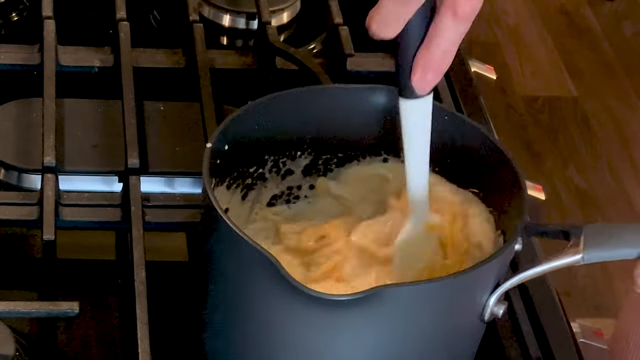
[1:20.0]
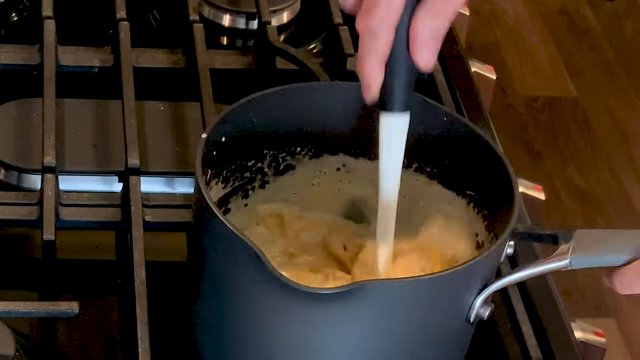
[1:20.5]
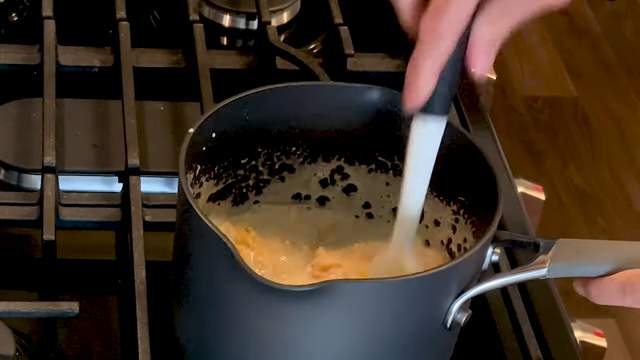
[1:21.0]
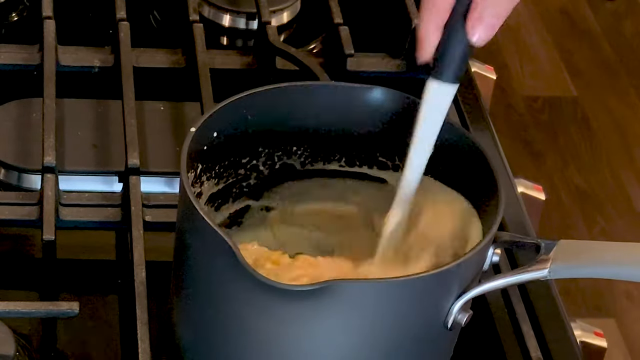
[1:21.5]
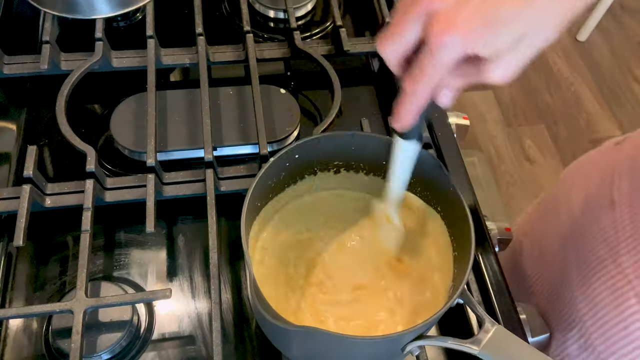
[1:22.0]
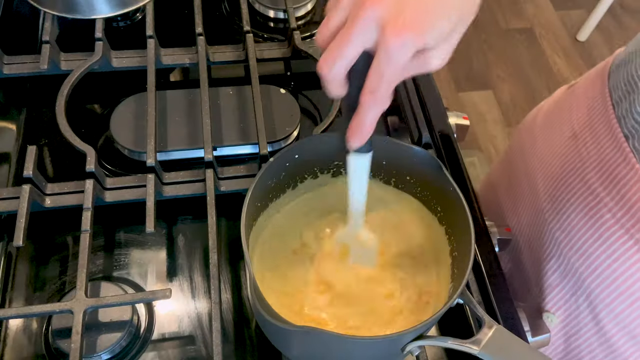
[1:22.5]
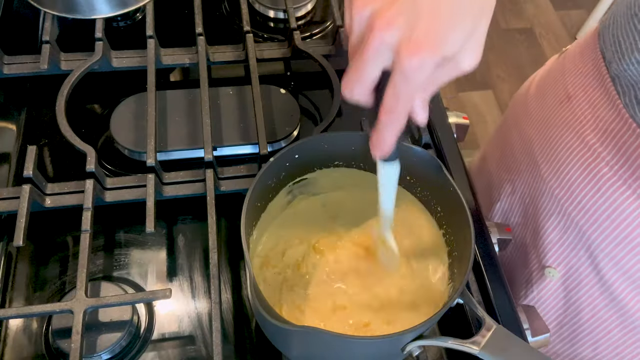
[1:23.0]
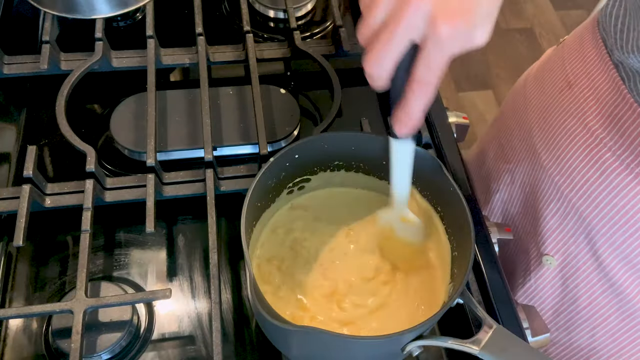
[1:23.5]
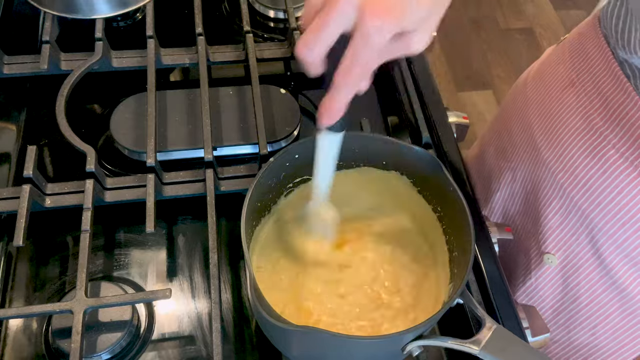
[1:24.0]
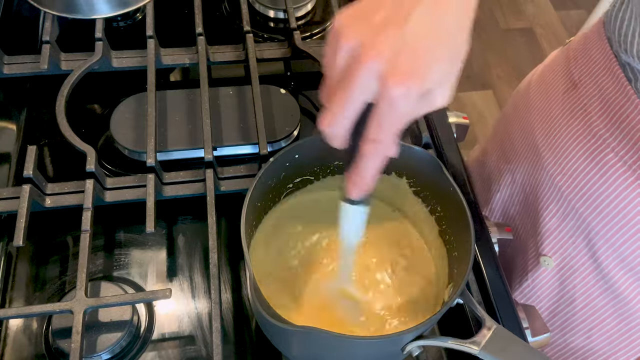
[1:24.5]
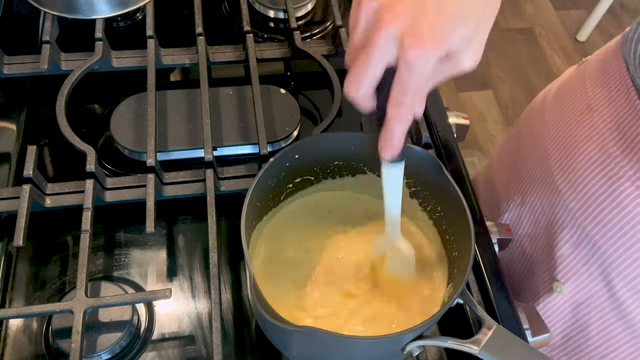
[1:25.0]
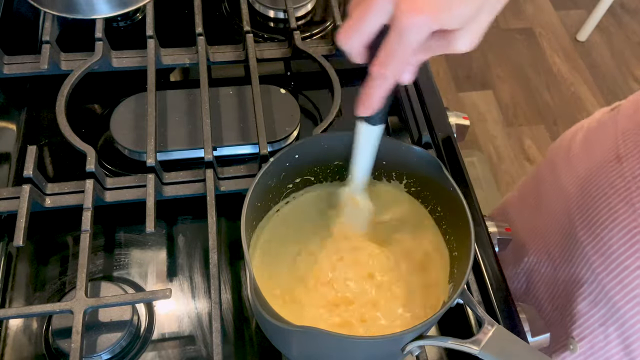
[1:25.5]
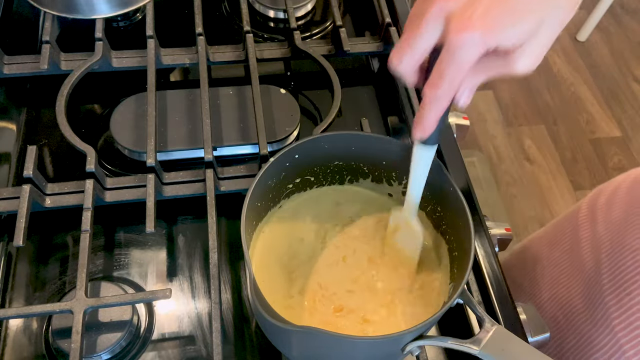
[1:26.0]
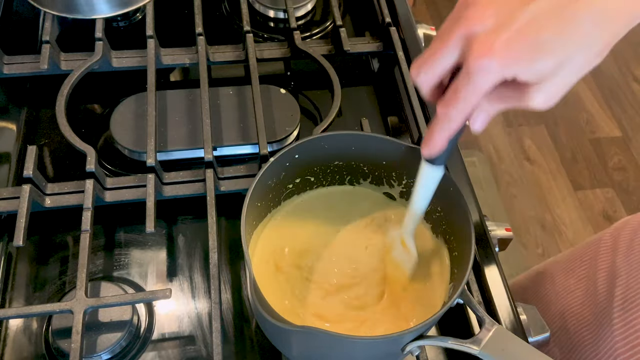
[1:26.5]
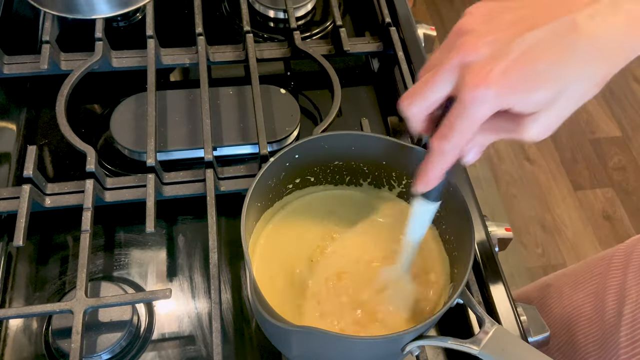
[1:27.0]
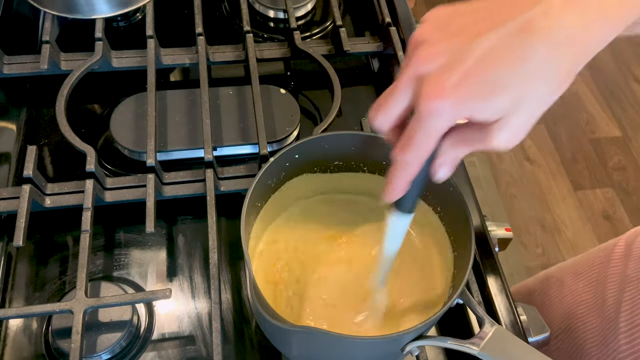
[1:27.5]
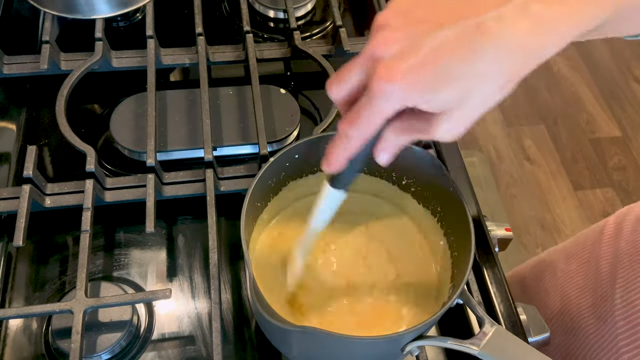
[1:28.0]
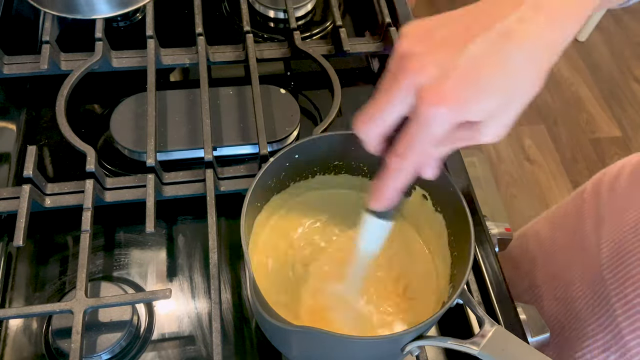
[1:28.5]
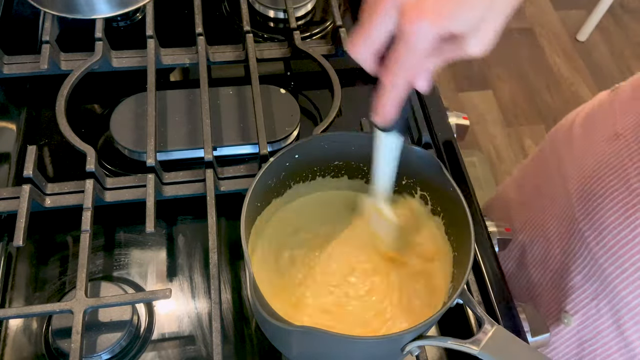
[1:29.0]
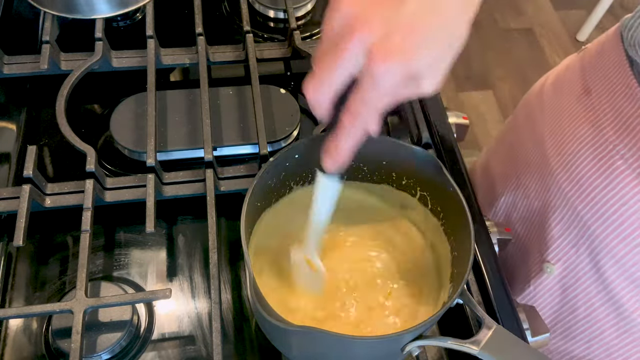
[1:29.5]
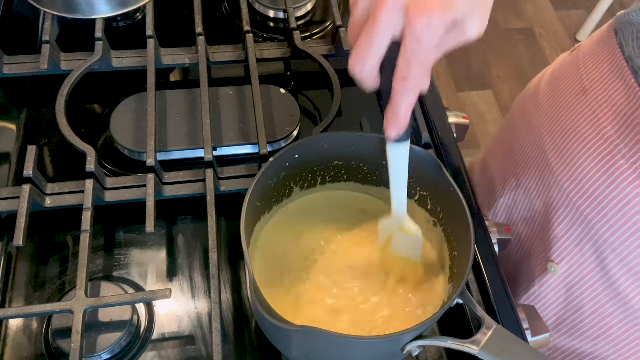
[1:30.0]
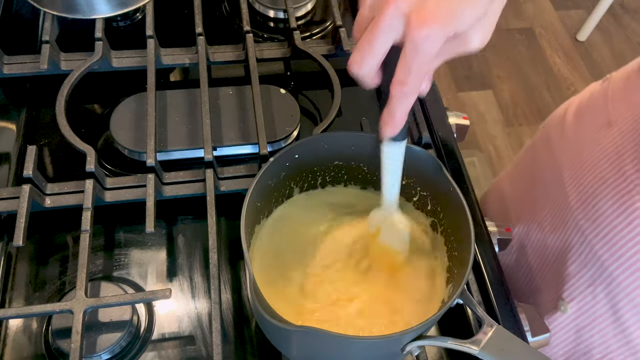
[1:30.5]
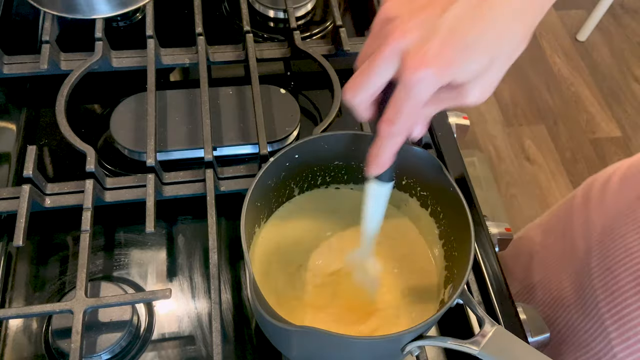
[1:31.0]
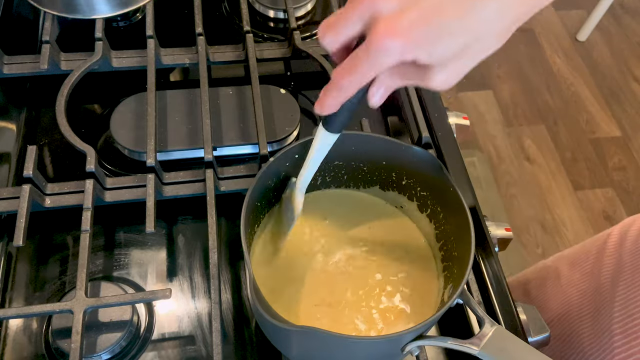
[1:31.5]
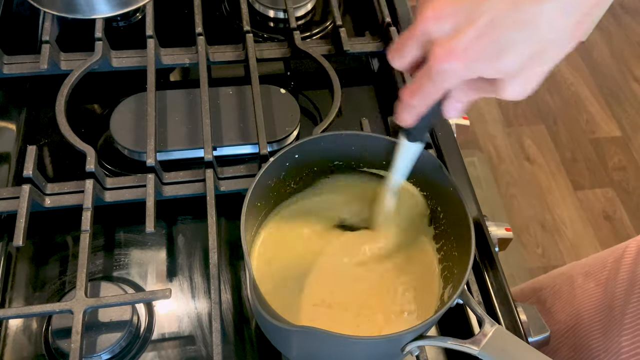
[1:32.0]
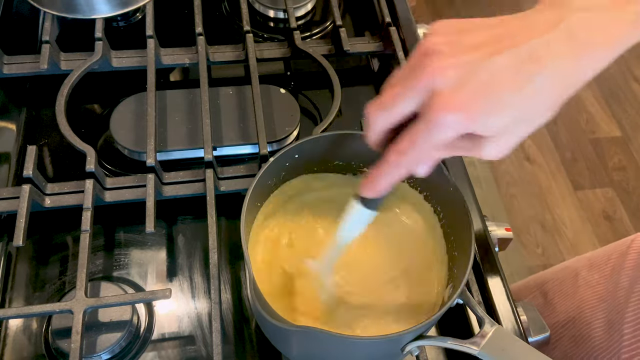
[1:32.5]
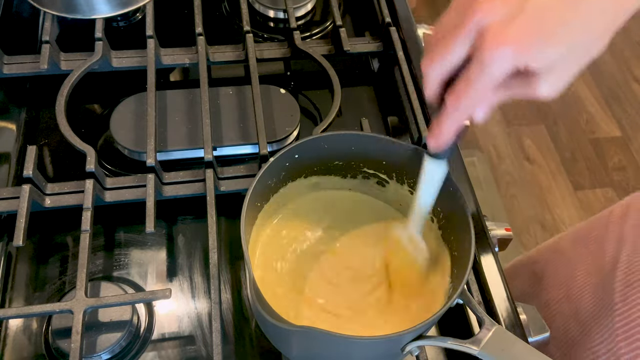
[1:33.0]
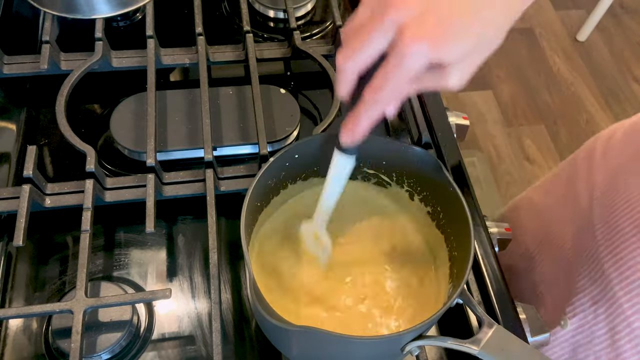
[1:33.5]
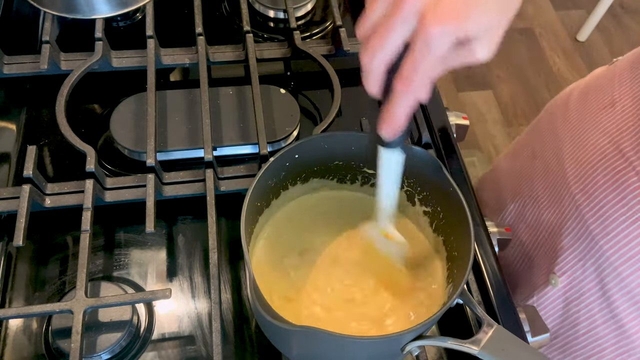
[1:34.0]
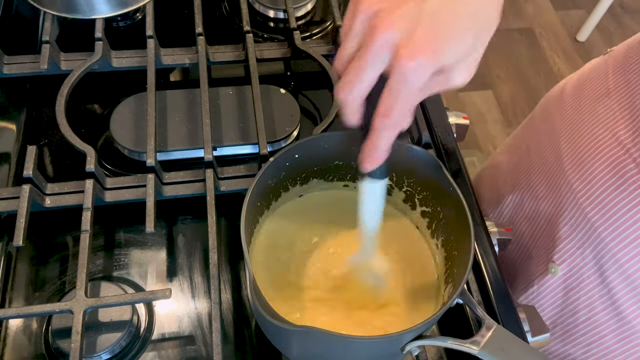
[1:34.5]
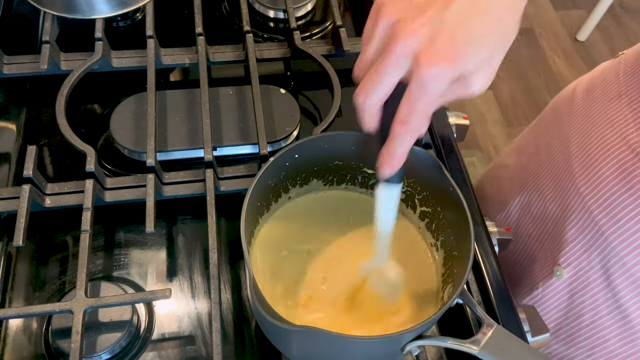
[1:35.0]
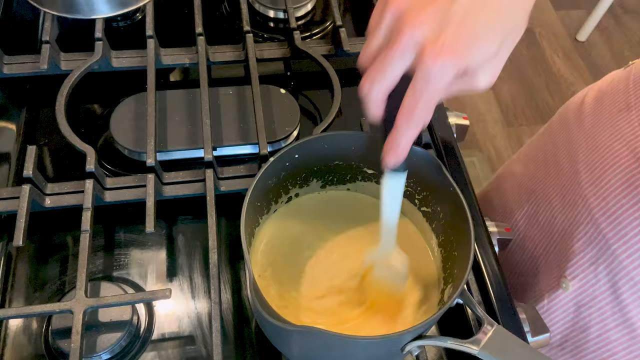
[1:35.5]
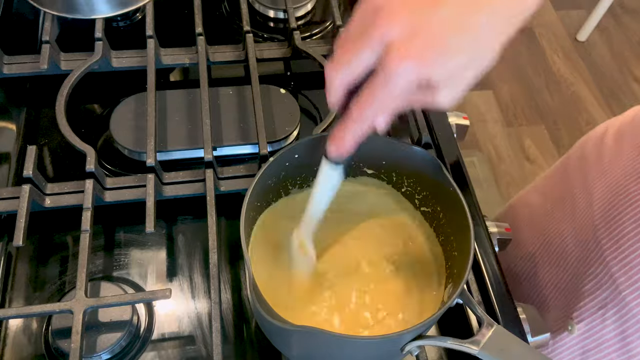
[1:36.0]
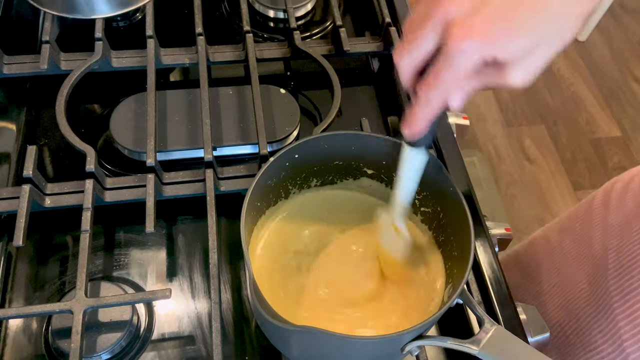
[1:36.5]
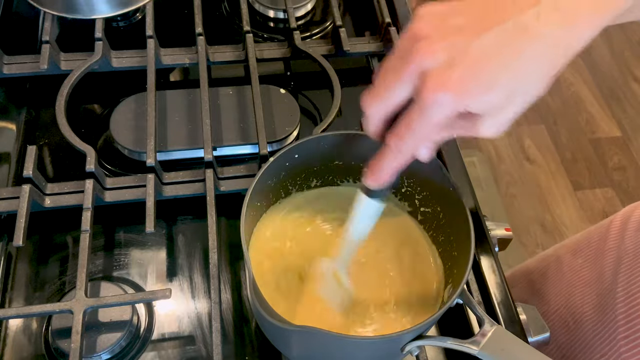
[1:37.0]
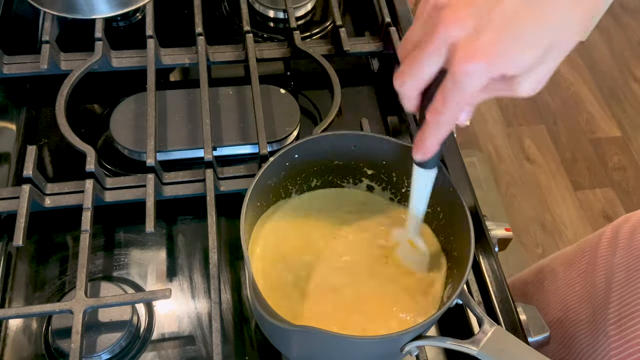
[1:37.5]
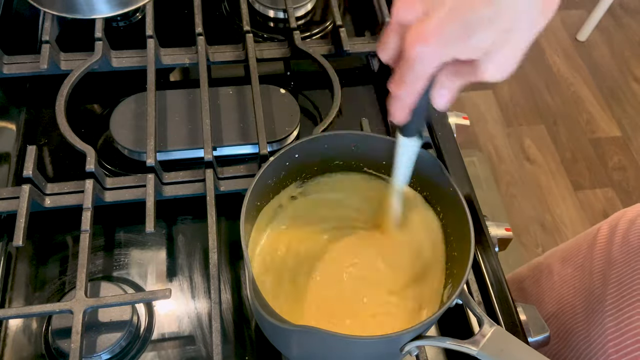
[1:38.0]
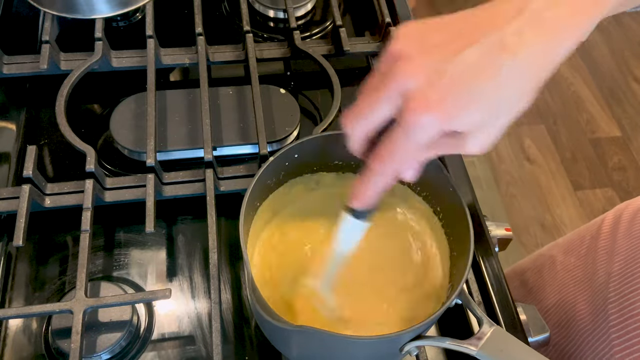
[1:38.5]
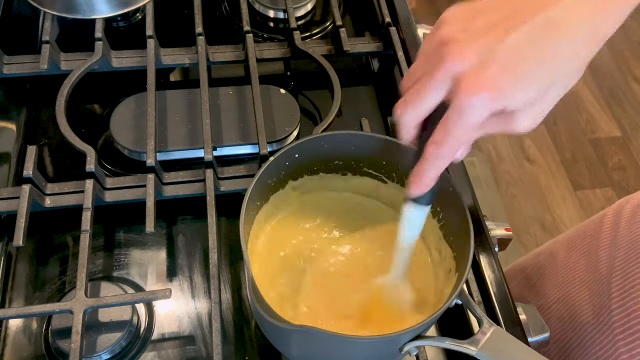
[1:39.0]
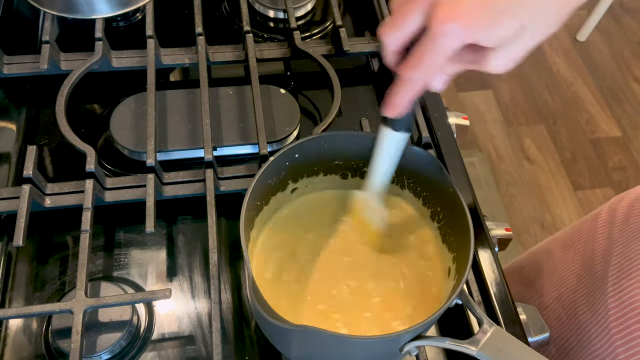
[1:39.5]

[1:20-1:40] As she keeps stirring, everything in the pan starts to come together and the cheese starts to melt. The mixture does not stick to the pan. The stove looks like a gas stove.